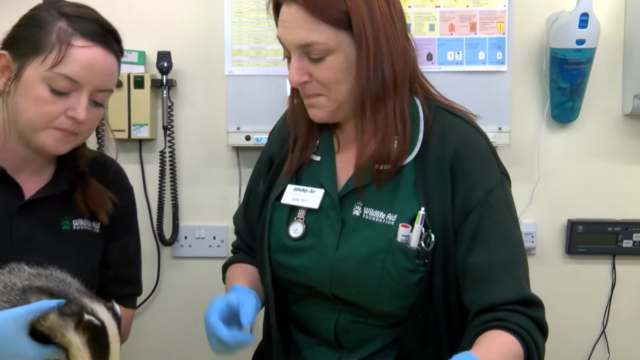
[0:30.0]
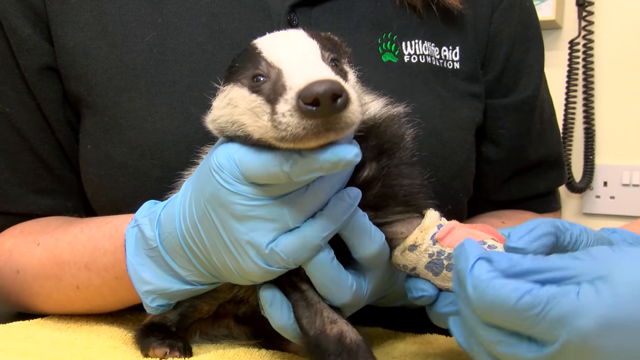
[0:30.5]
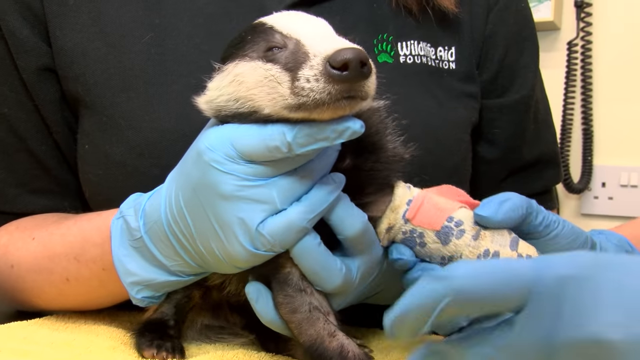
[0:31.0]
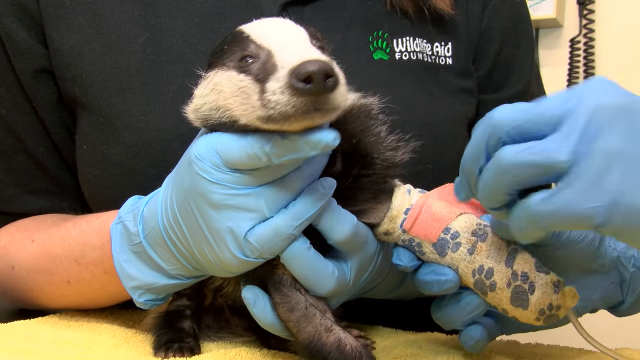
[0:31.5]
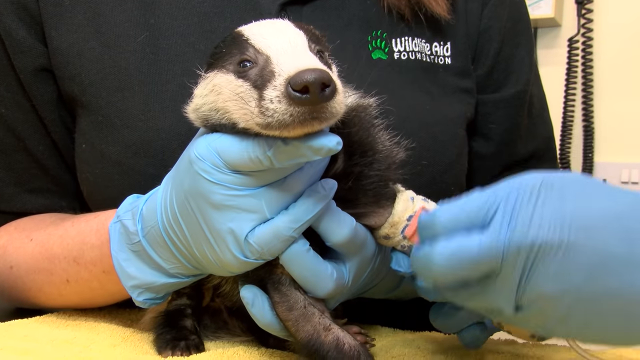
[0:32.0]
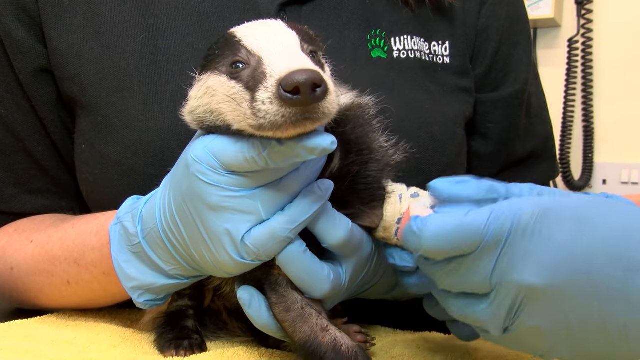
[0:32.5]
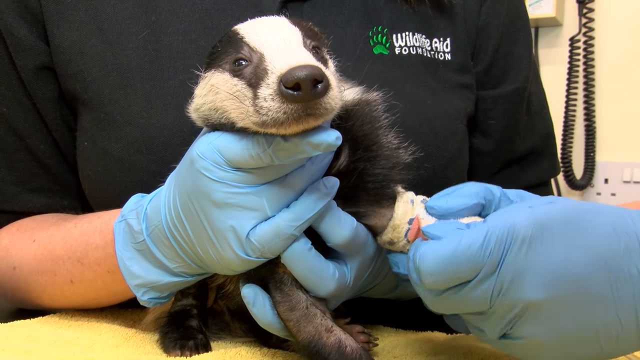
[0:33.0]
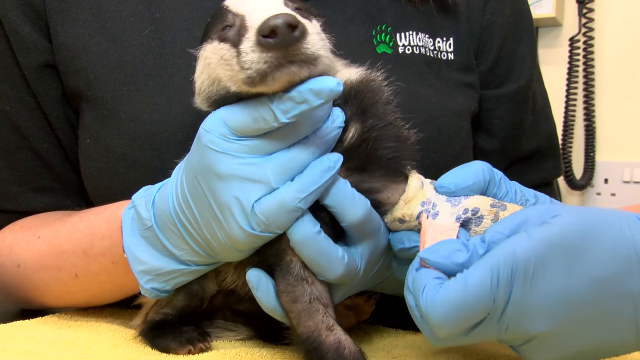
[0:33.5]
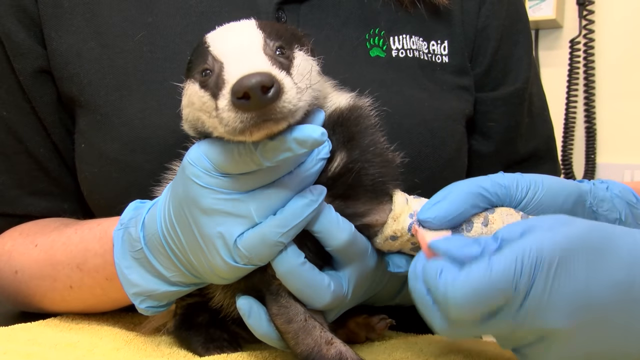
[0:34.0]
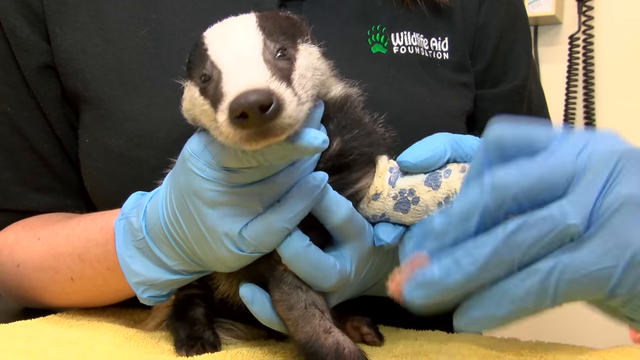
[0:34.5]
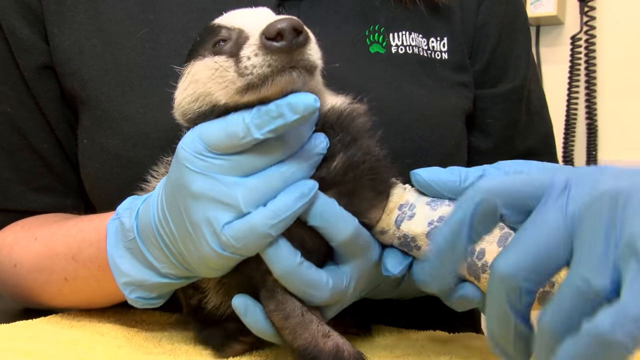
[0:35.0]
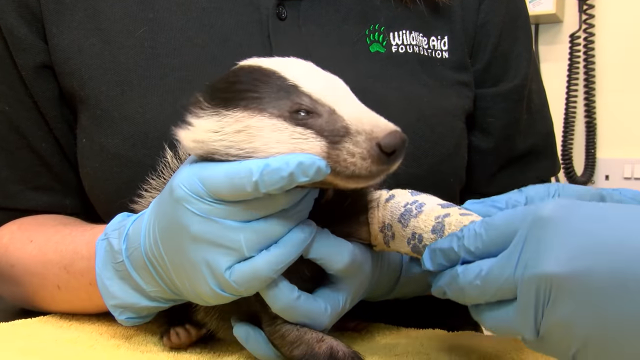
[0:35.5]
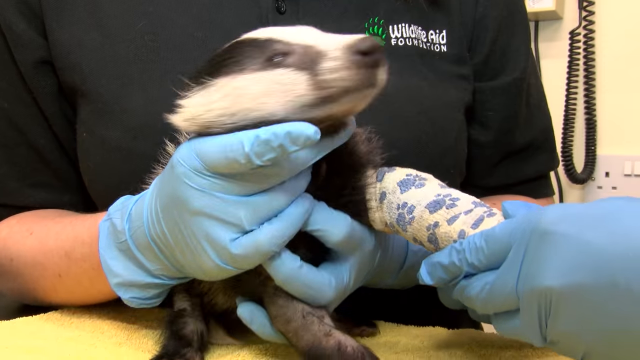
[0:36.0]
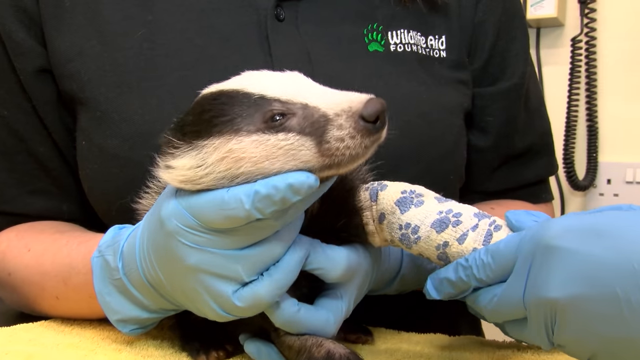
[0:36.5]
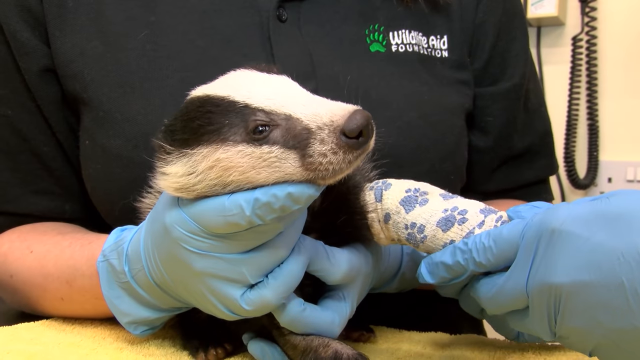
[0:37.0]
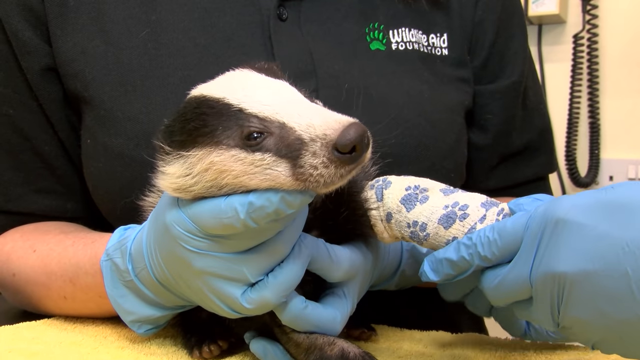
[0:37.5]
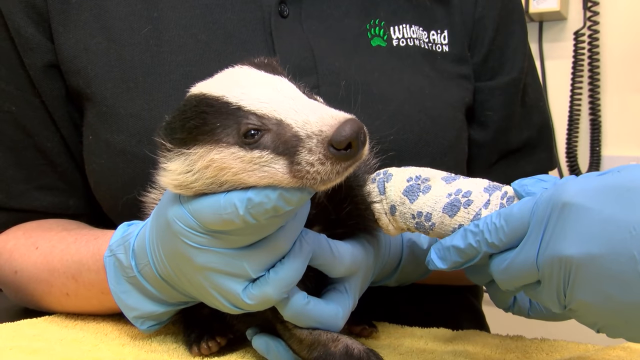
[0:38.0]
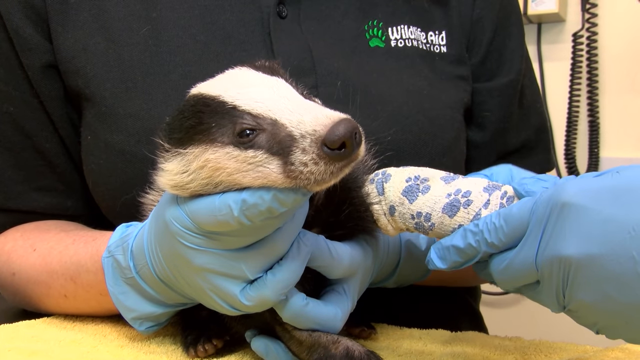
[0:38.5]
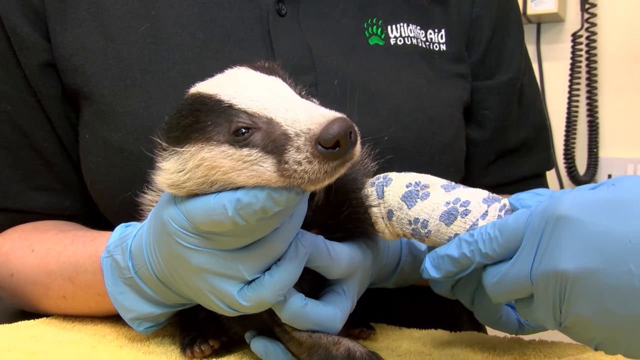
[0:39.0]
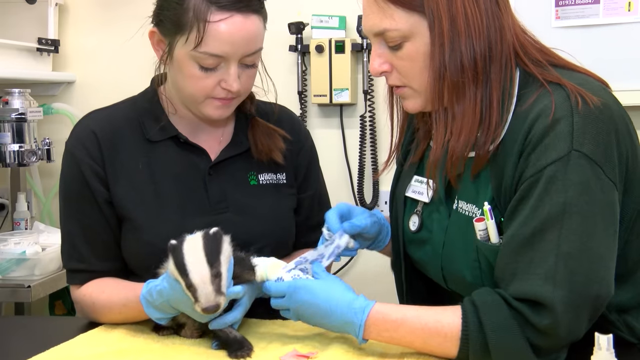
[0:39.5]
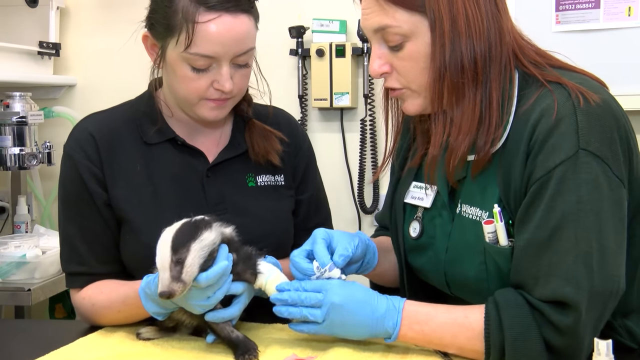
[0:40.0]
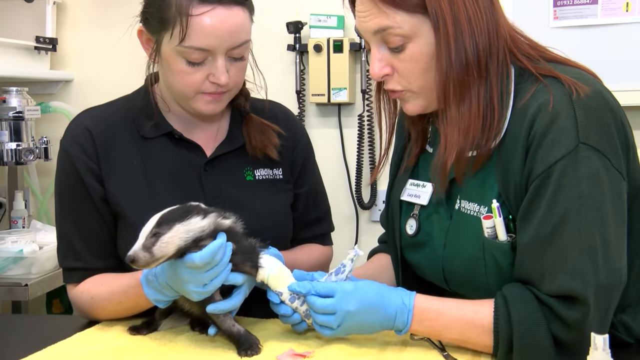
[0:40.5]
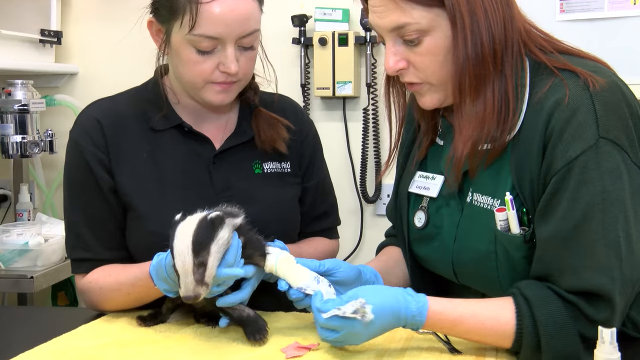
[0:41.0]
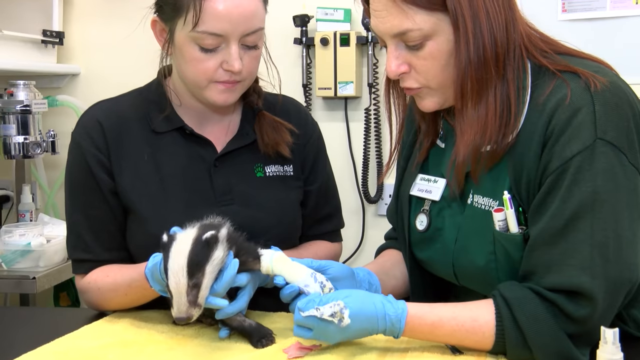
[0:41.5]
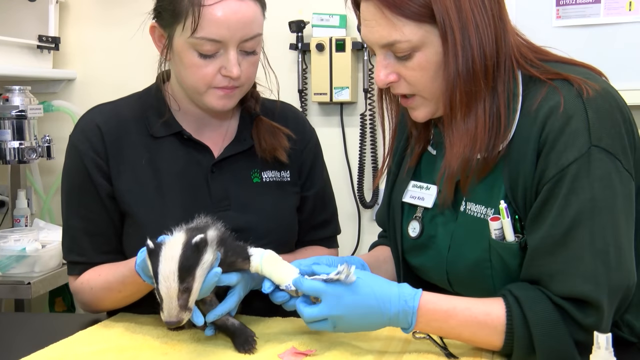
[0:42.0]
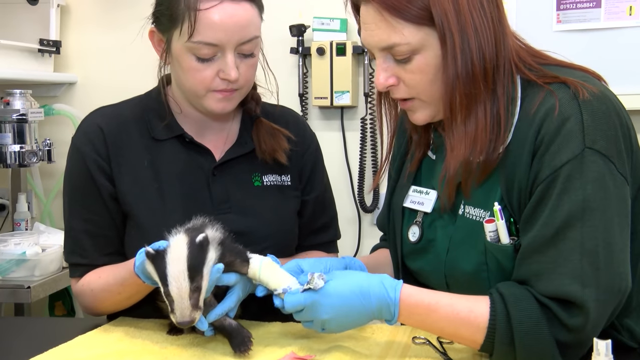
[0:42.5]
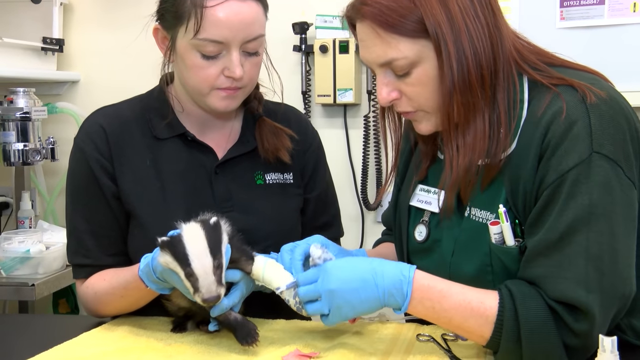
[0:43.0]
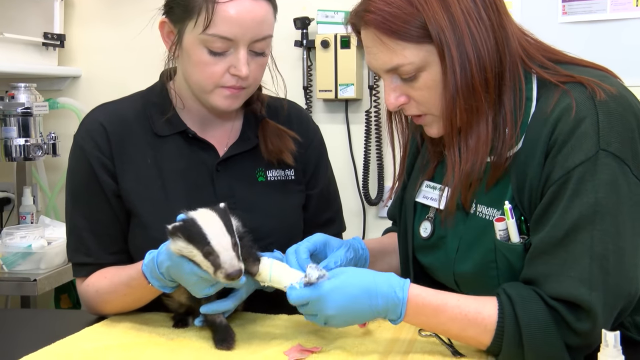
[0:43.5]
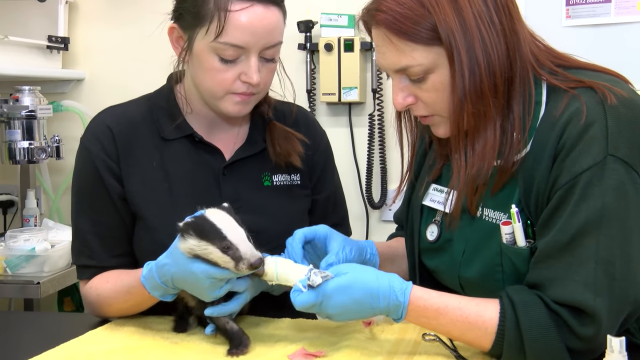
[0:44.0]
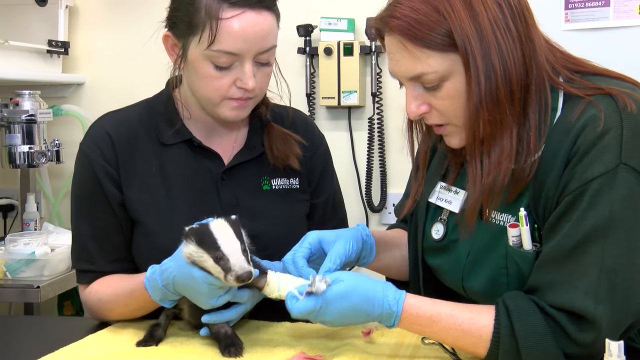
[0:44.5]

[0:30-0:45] A close-up shows the badger as the women hold it. It looks like it may have a broken leg, and it appears to have a cast on: a white cast with little blue paw prints and a pink band-aid on it. They are at a veterinarian office. The woman in the black shirt holds the badger while the woman in the green shirt takes off the pink bandage, apparently taking off the cast.